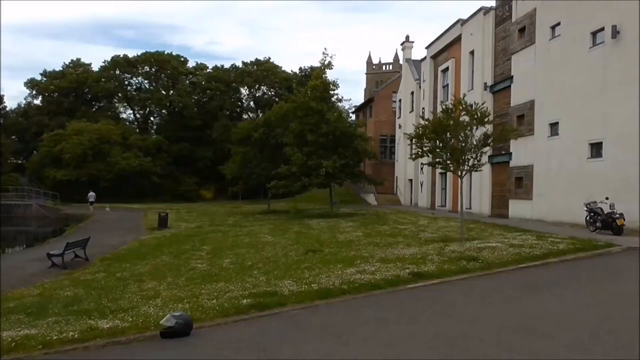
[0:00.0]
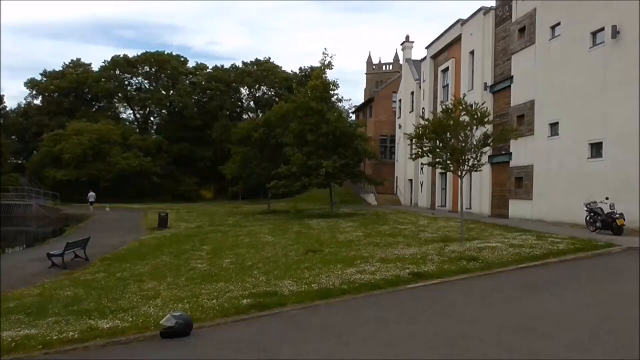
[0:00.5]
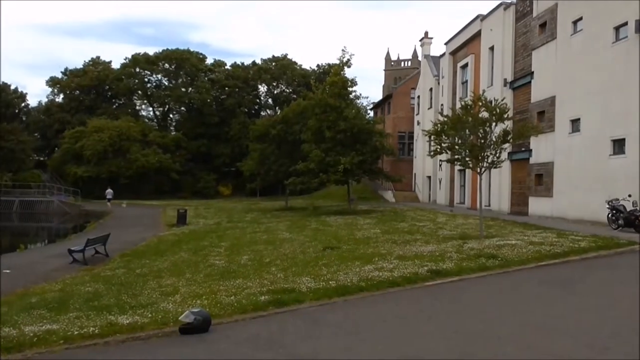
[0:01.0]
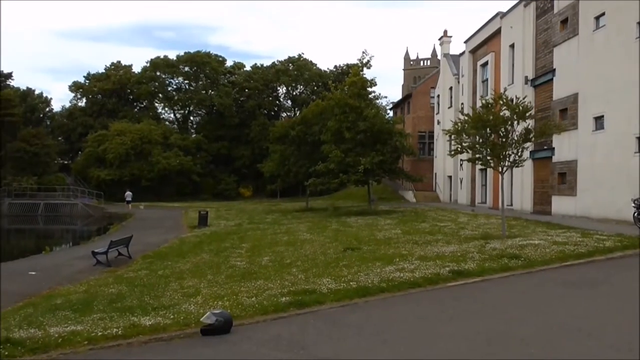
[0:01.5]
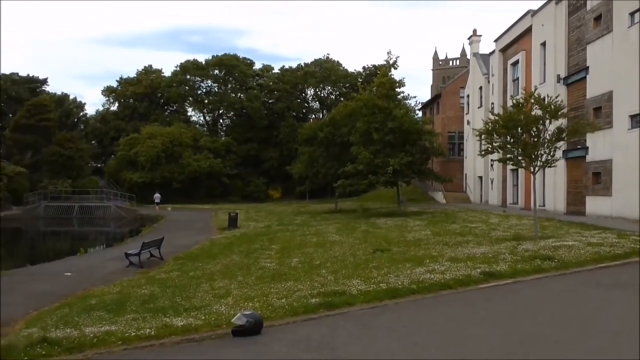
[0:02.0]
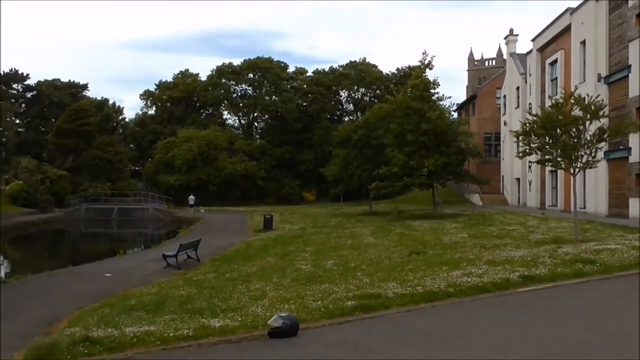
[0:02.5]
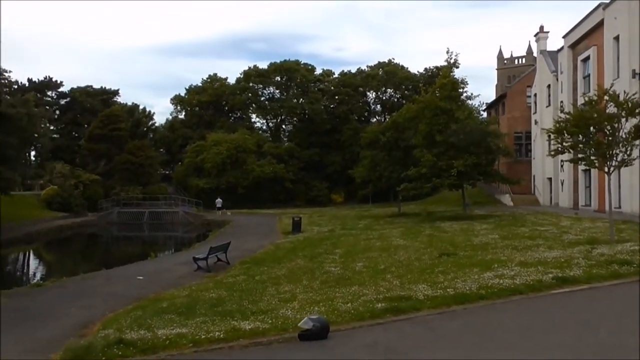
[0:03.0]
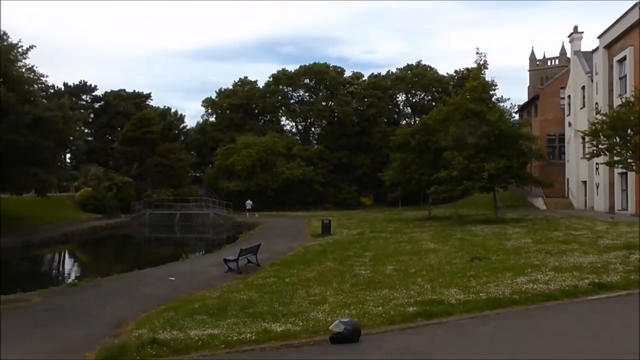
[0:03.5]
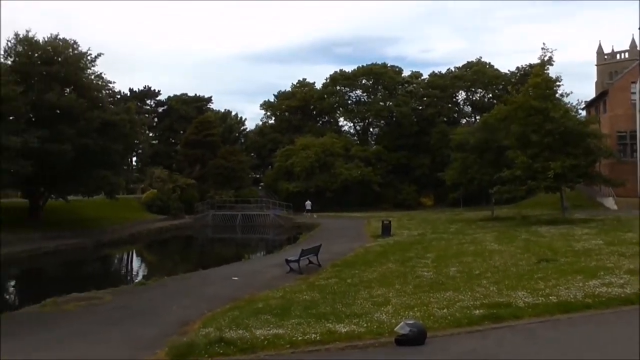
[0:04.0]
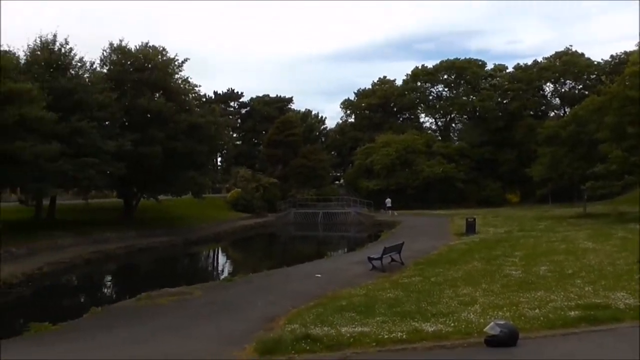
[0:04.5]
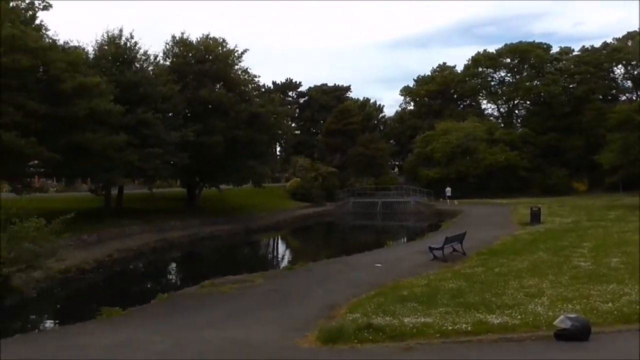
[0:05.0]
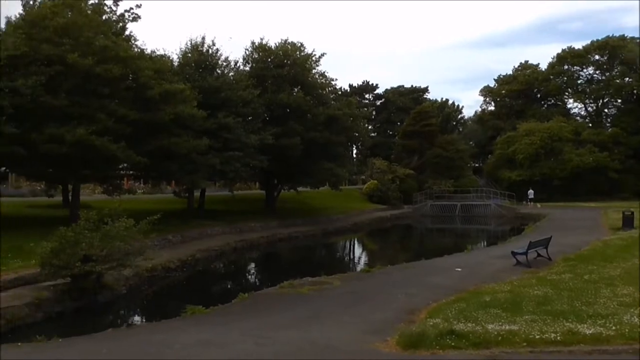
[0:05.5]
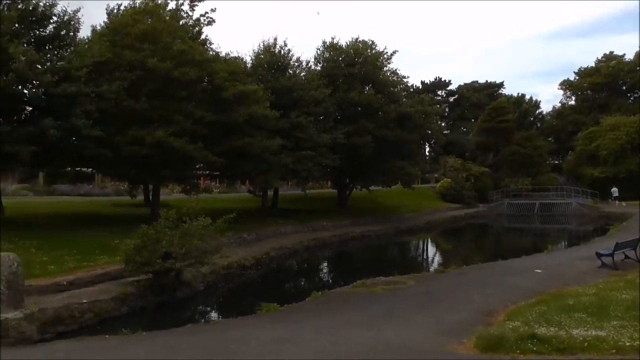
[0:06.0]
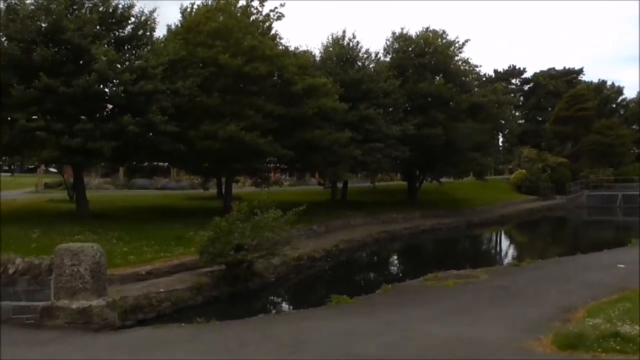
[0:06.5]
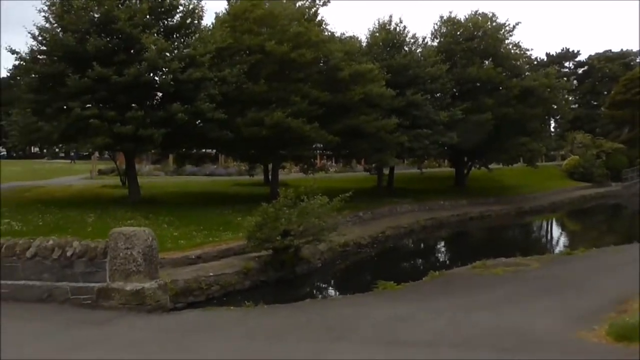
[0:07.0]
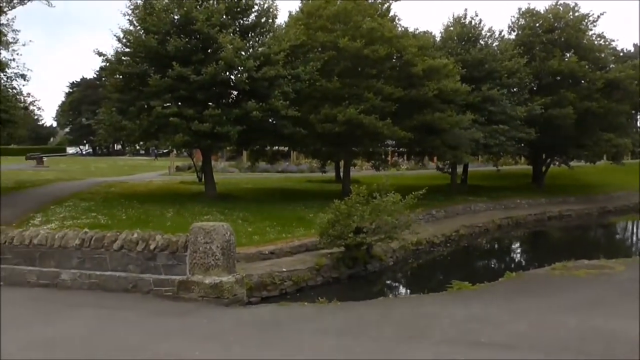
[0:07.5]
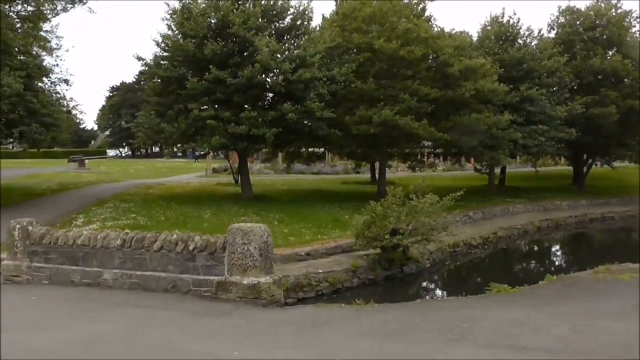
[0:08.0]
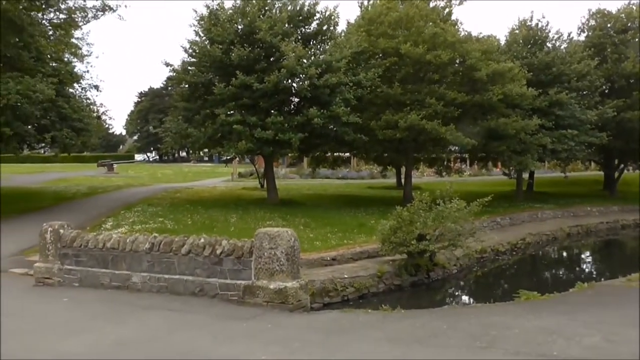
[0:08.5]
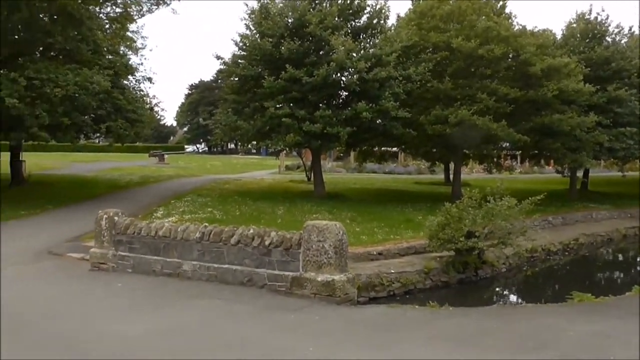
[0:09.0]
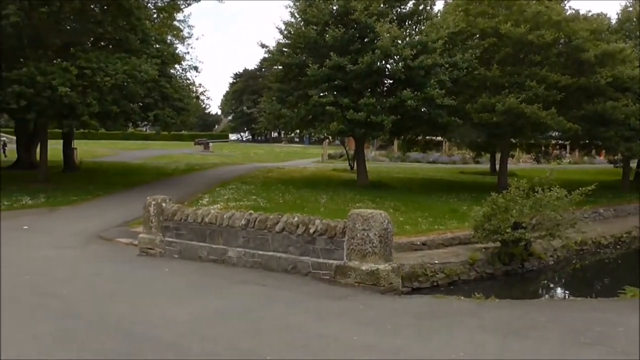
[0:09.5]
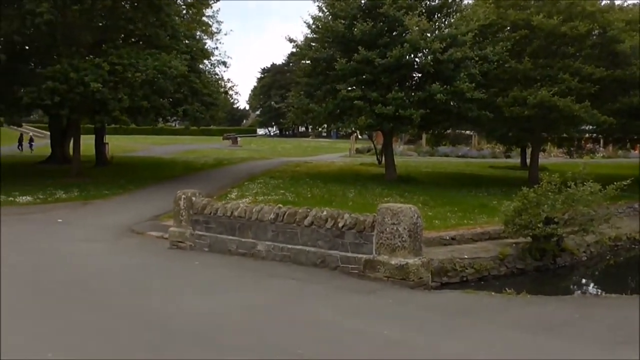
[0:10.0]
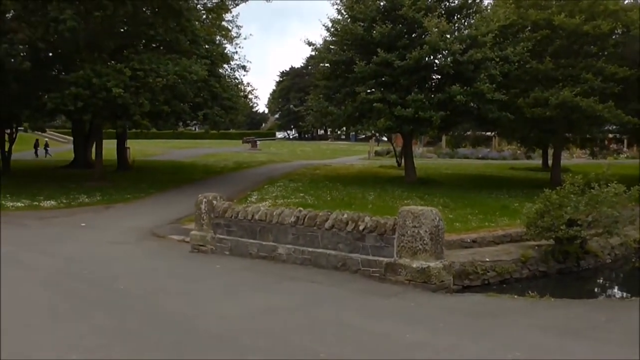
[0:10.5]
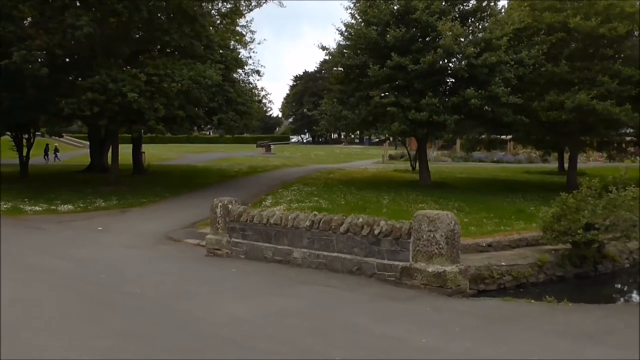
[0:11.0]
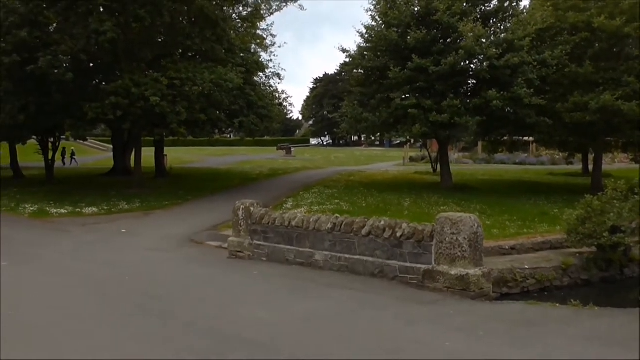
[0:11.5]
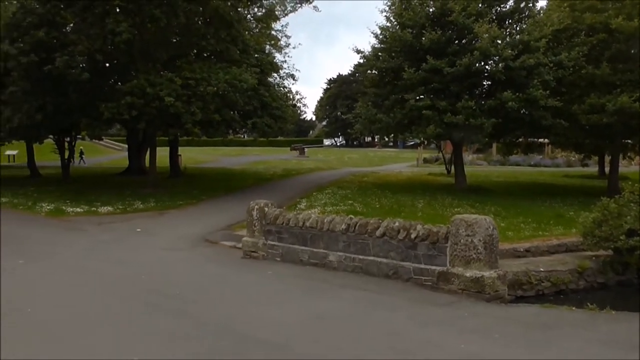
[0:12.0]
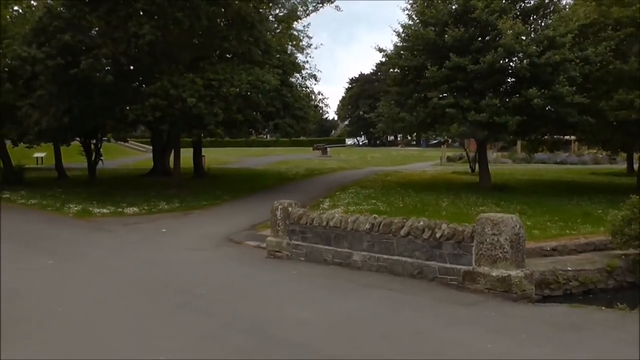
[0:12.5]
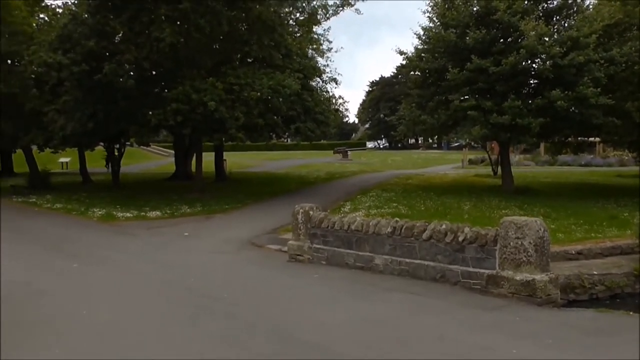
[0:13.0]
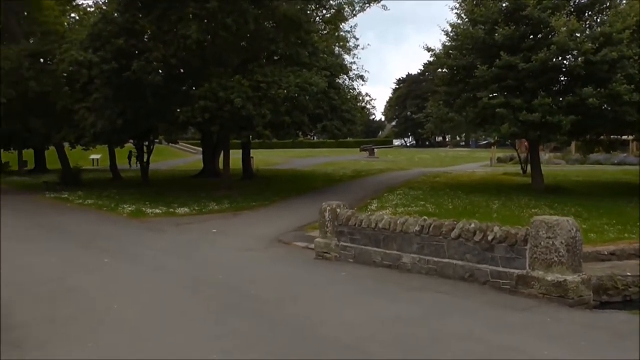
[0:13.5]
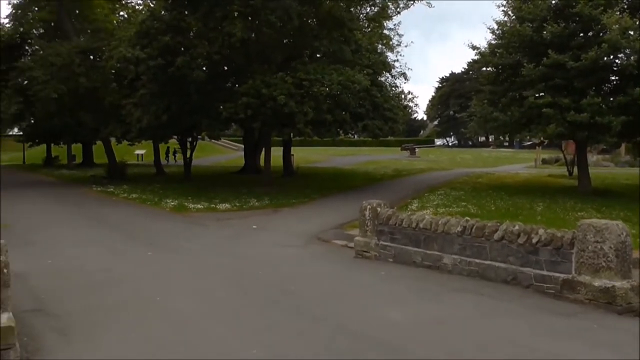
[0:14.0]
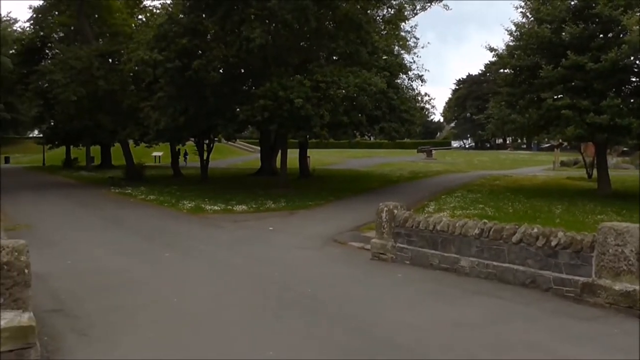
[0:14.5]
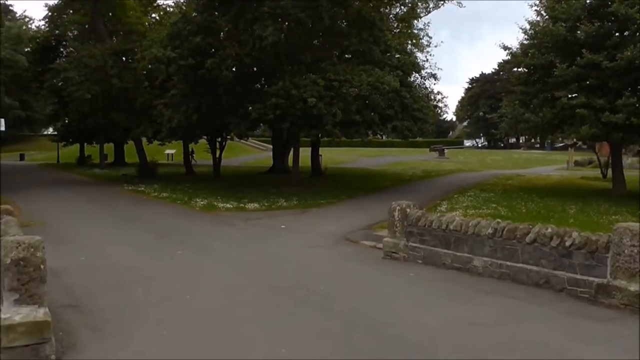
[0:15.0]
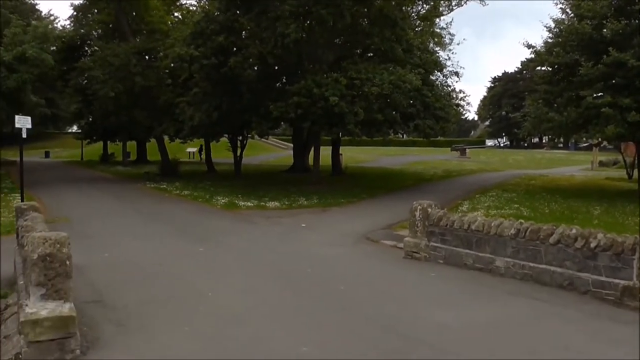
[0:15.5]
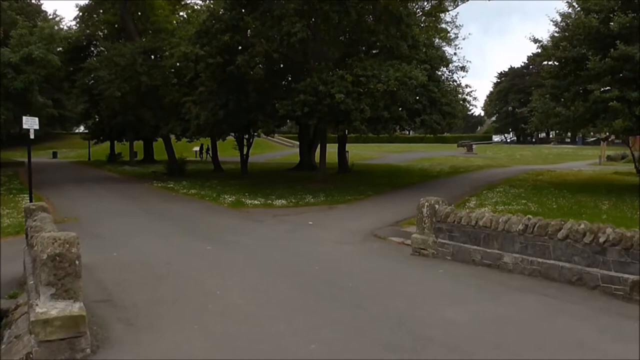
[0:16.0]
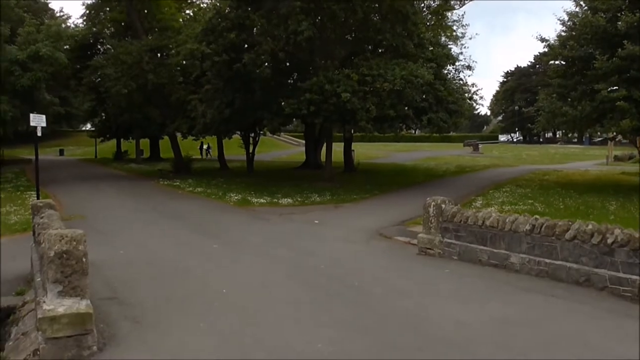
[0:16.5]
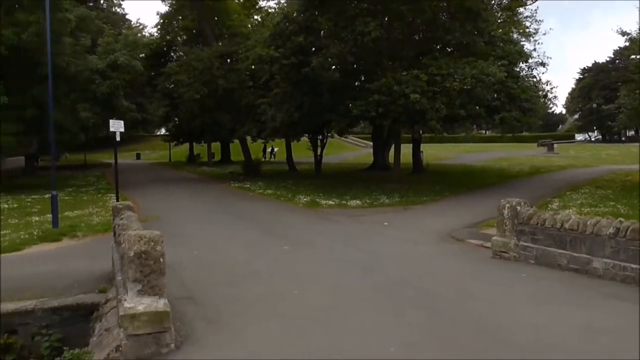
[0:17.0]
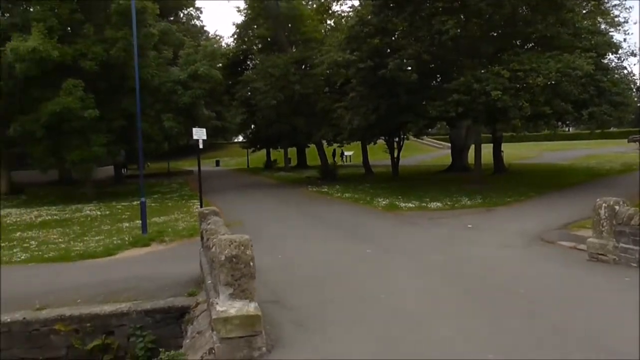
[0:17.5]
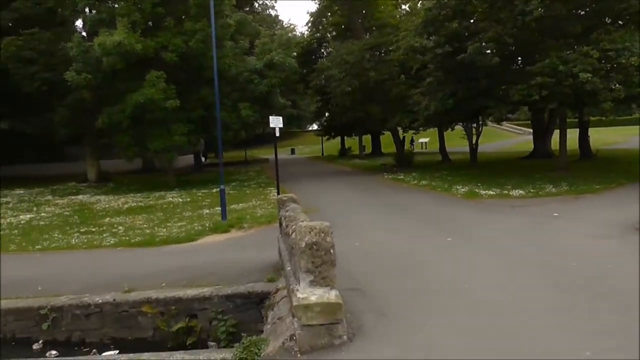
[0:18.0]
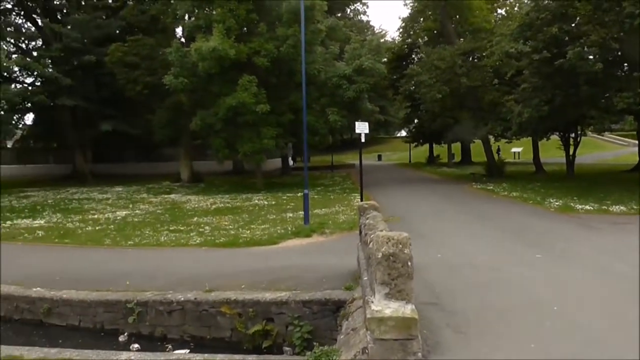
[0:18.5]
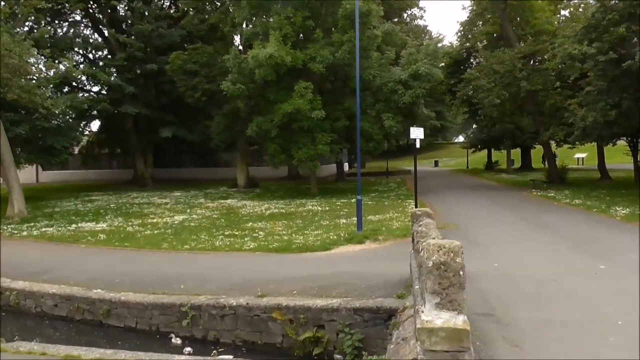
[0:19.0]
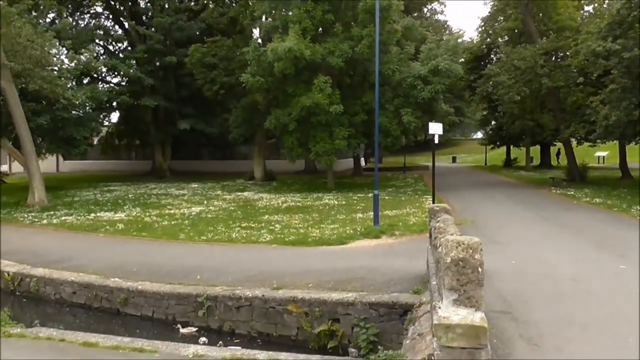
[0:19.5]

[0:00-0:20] Someone films a park, and the camera is somewhat shaky, as if the video is being taken on a phone. On the right at first is a row of white and red brick buildings about two stories high, and in the distance a tower that looks like a church tower is hidden behind one of the buildings. As the camera pans to the left, a stream running through the park comes into view. In the background a man walking a dog approaches a wooden bridge over the stream. A bench is on a walkway running along the bank of the stream closest to the camera. On the other side of the river are lots of trees and a grassy area, along with a low stone wall along a walkway that looks like part of another bridge over the water. The camera continues panning left, revealing additional walkways, with two people walking on one of them in the background. The camera pans around completely, and some ducks are swimming in the water at the lower left of the screen.